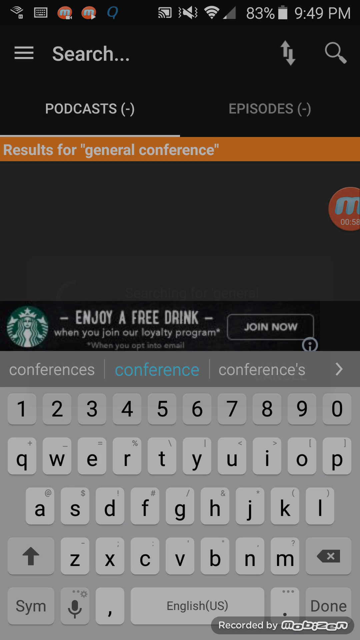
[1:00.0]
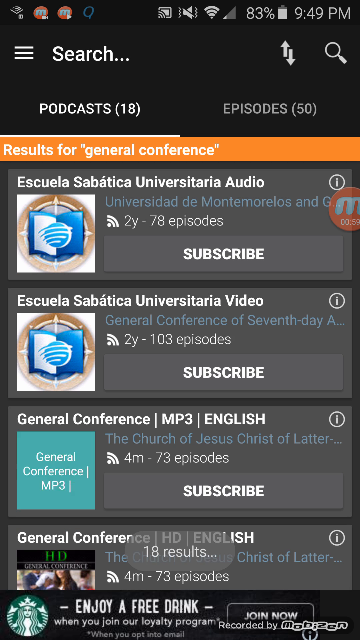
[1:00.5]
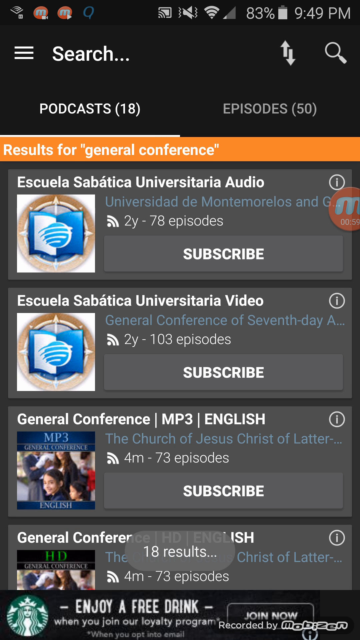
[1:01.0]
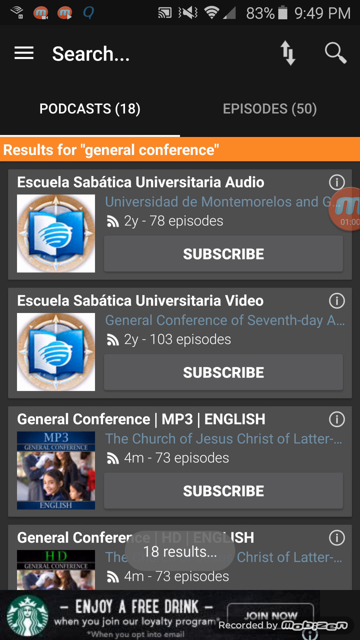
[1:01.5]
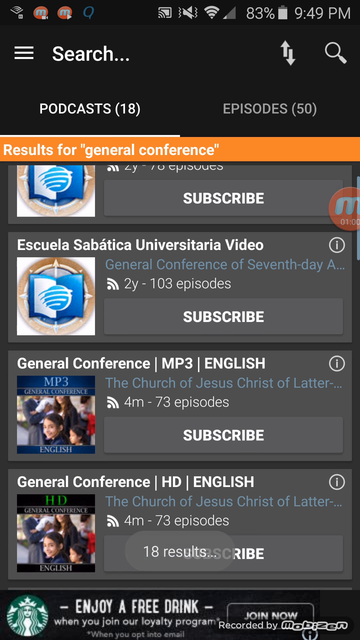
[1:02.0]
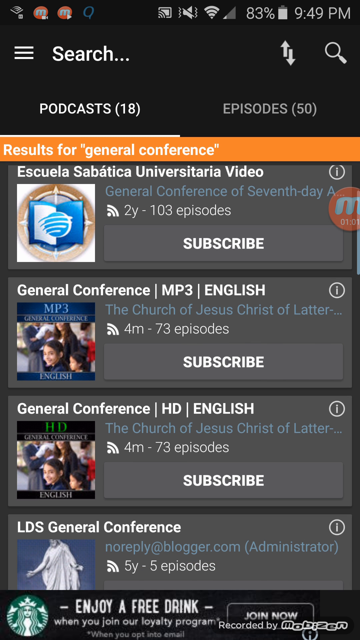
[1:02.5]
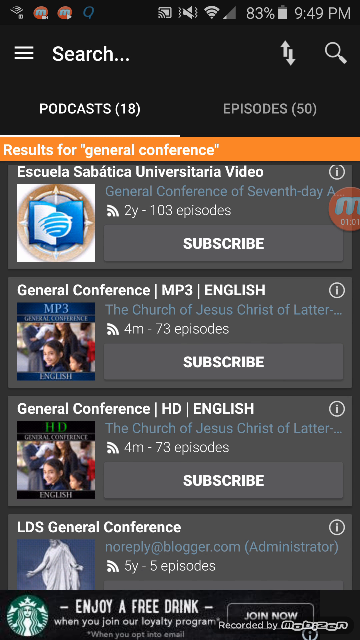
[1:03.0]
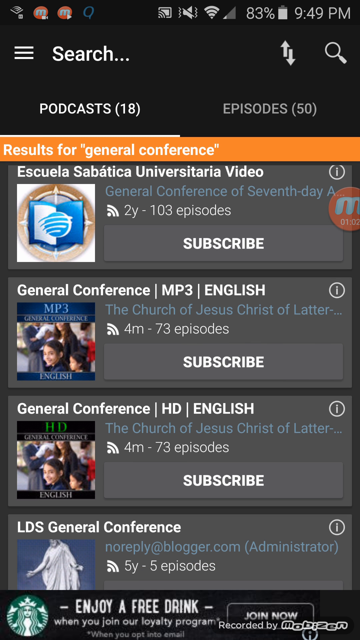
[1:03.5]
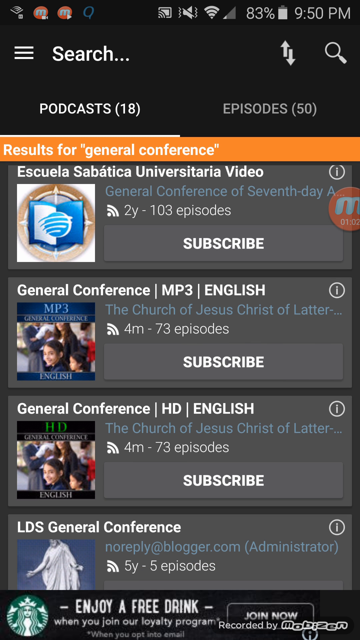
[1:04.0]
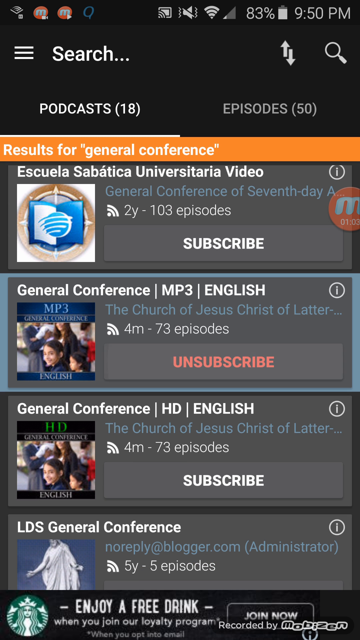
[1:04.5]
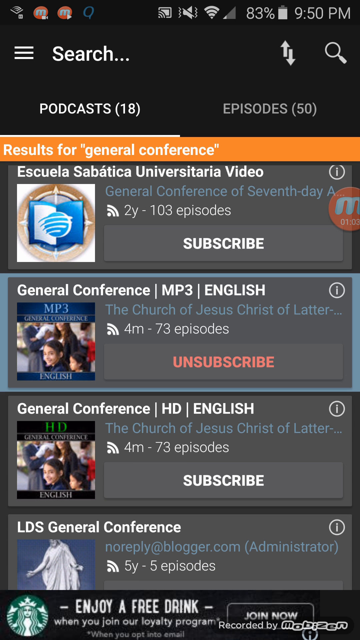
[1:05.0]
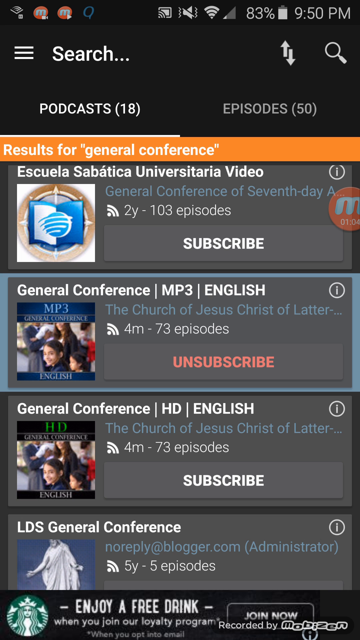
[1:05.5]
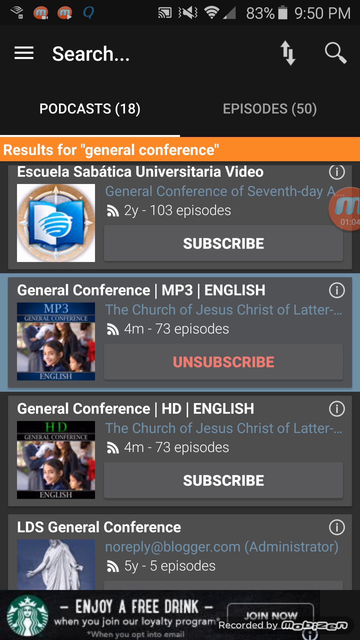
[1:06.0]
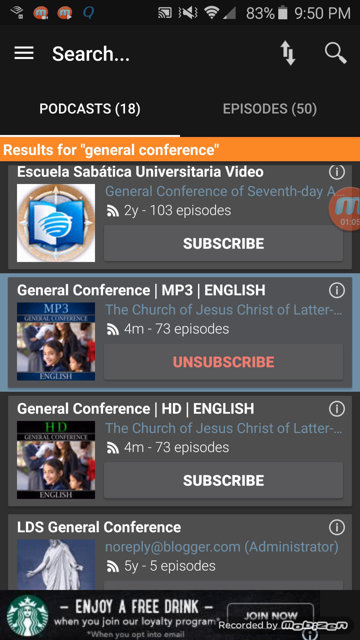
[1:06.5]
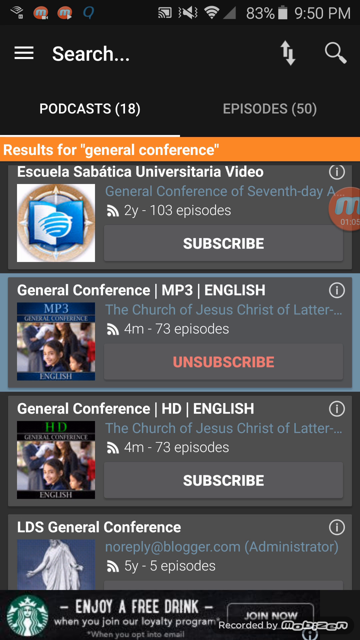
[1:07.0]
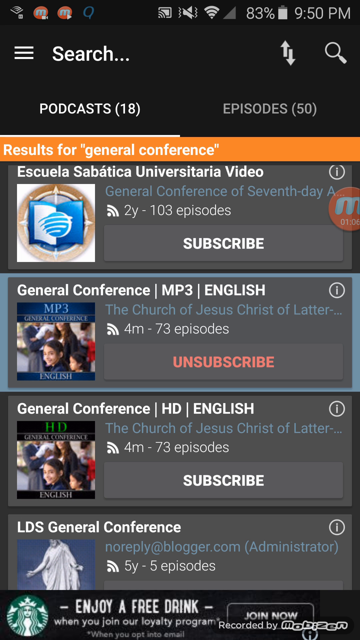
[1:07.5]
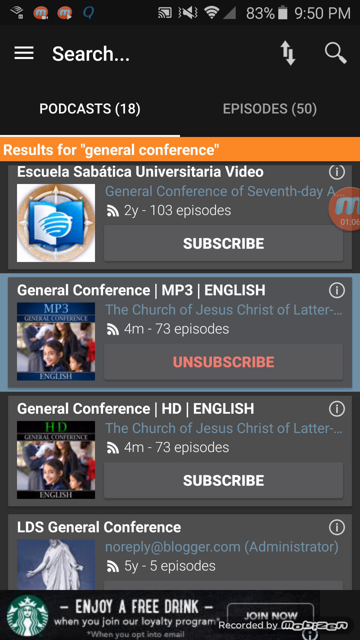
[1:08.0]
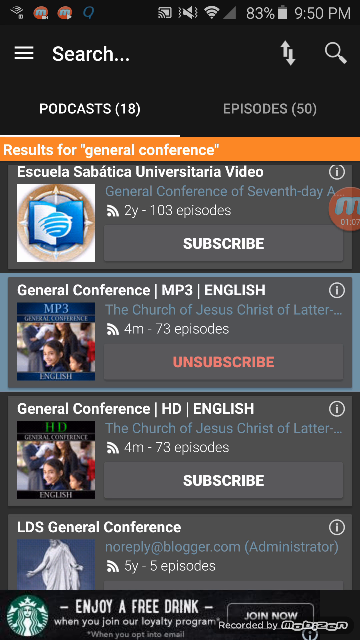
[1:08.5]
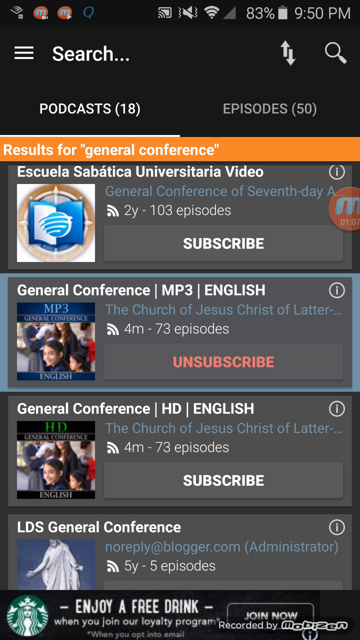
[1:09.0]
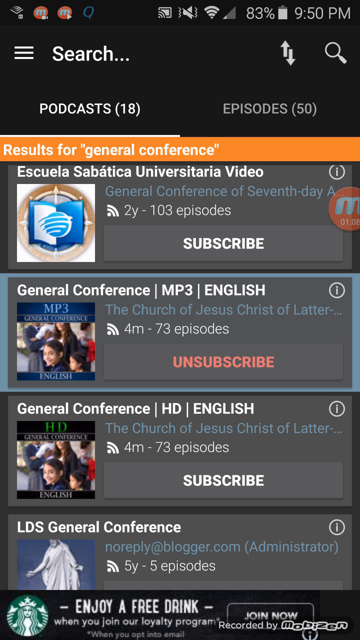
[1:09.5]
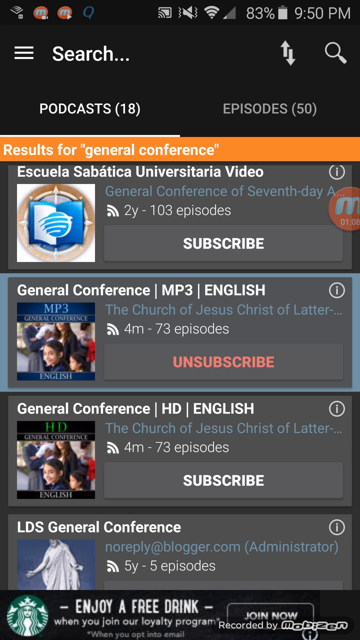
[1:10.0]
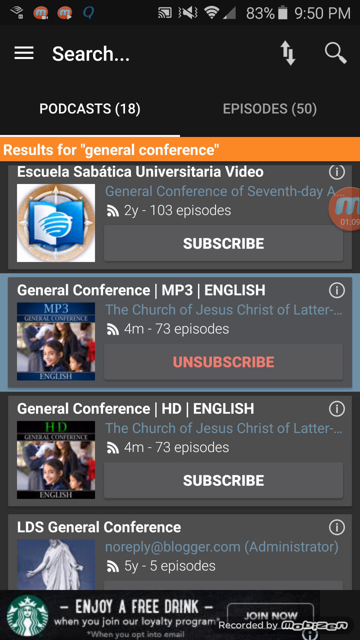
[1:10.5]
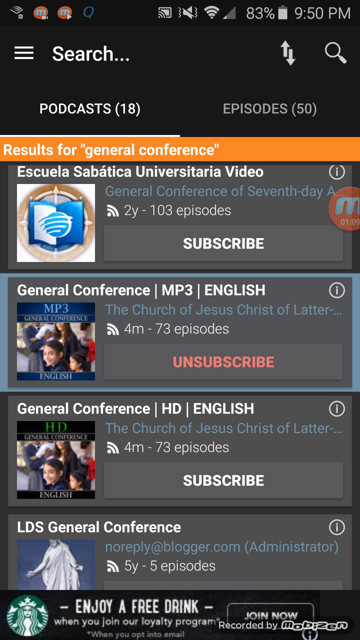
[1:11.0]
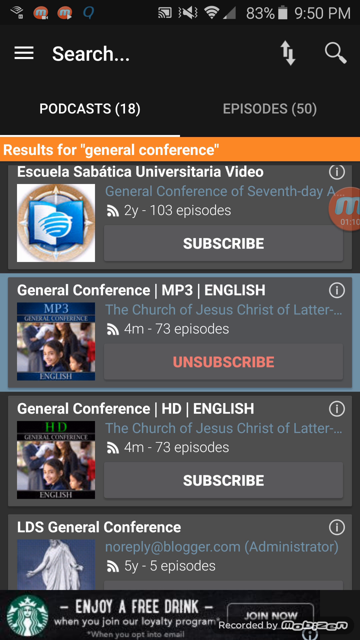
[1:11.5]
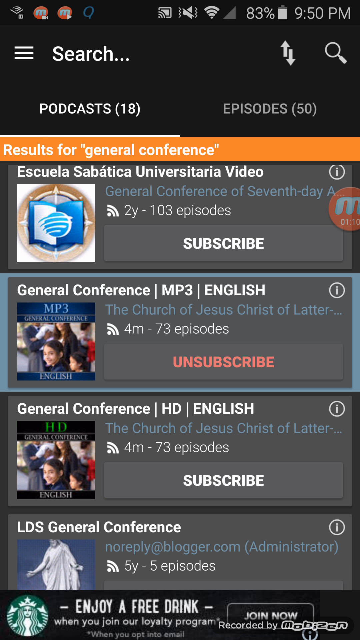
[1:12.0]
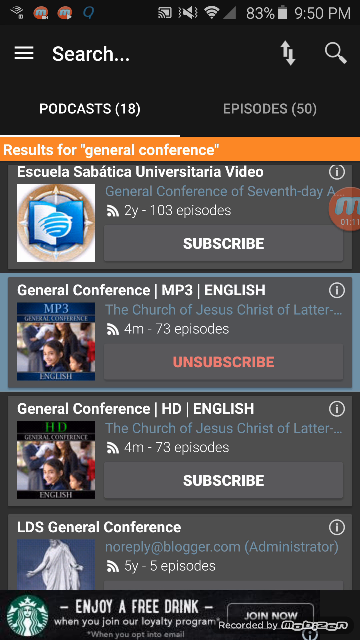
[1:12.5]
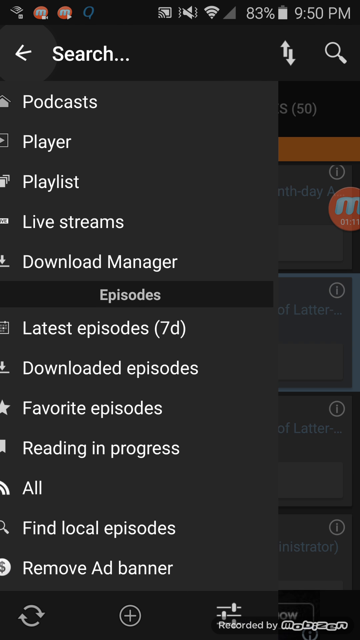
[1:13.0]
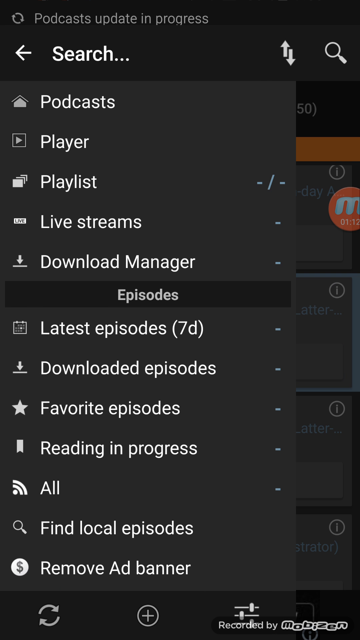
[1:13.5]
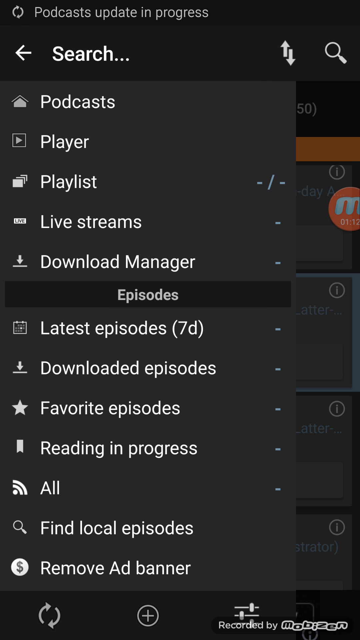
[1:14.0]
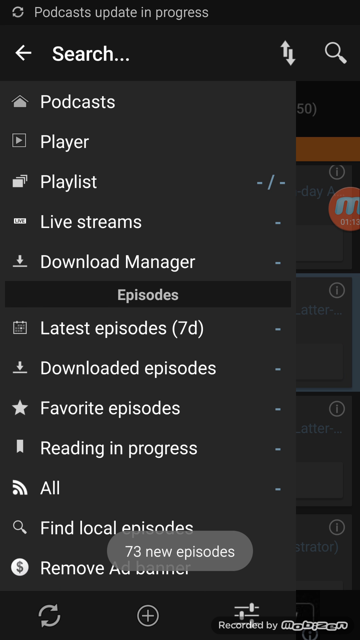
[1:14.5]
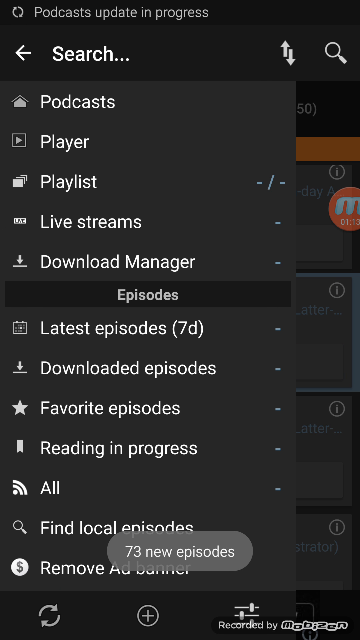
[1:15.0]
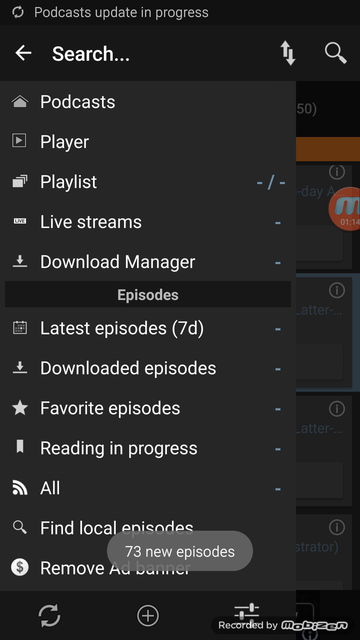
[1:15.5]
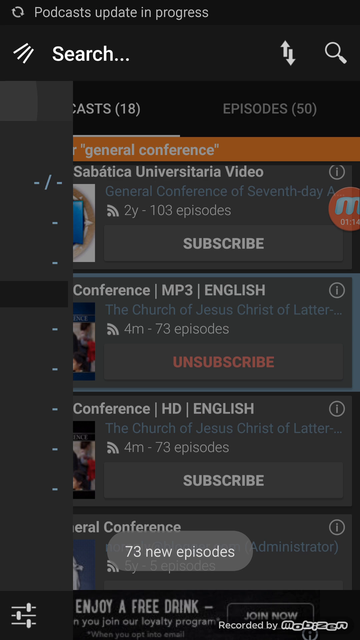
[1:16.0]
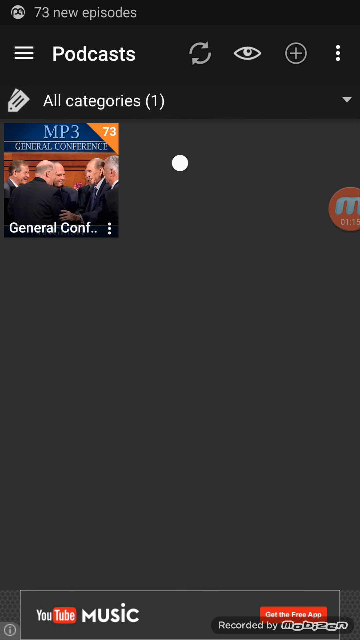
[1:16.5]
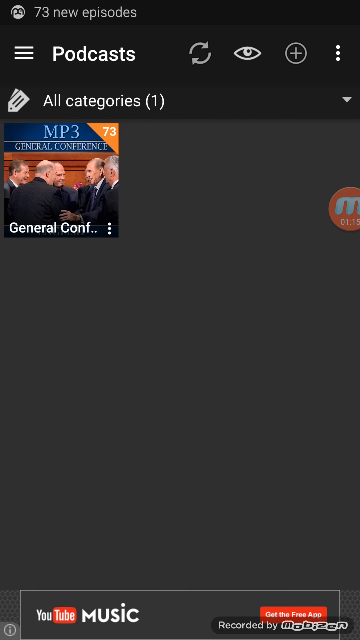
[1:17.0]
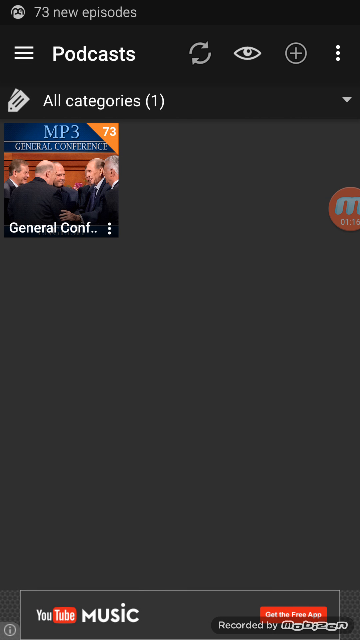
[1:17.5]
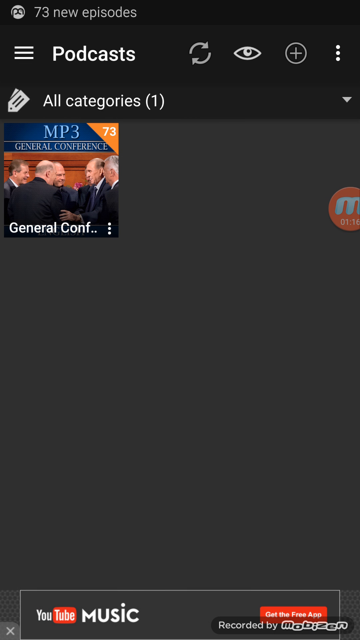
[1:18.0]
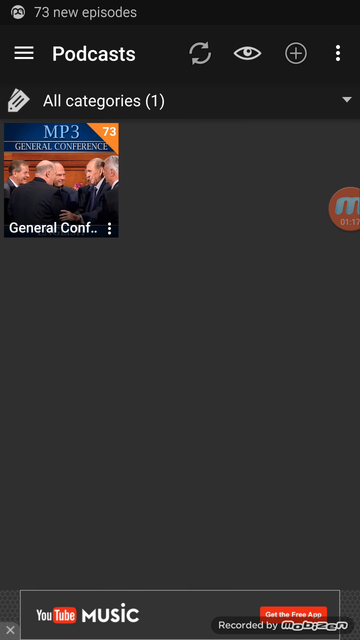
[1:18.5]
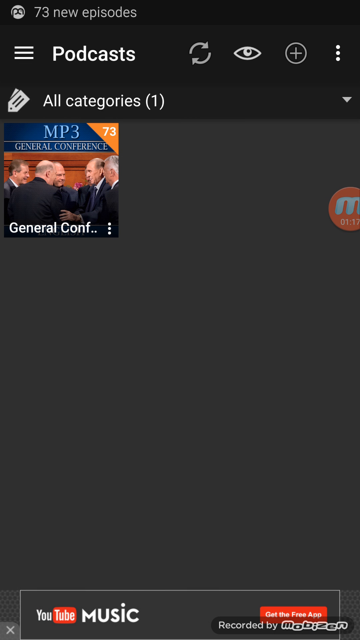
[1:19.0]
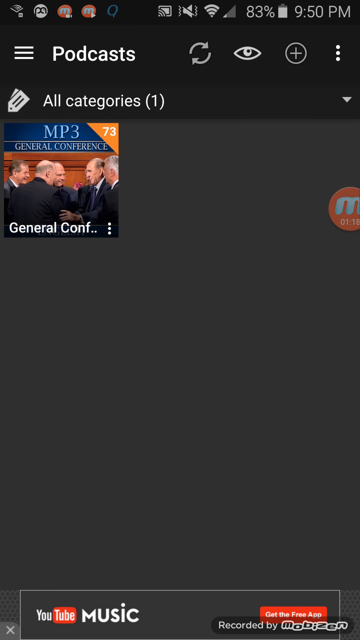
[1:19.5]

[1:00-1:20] A search result is shown in an app, with the smartphone keyboard visible at the bottom of the screen, apparently brought up by tapping the search option. White text inside an orange banner near the top reads "Results for General Conference", so the search appears to be General Conference, and it does not look like many results came up. The status bar shows 9.49 p.m. and 83 percent battery. On the left are a couple of red icons, looking like the same app open twice, and across the top are other icons including the Wi-Fi icon and a volume icon; the phone's volume looks muted. With the keyboard still showing, the results include General Conference MP3, General Conference HD, and LDS General Conference. The person then slides a menu over from the left.